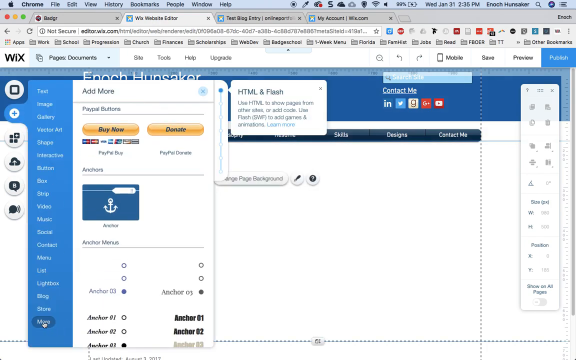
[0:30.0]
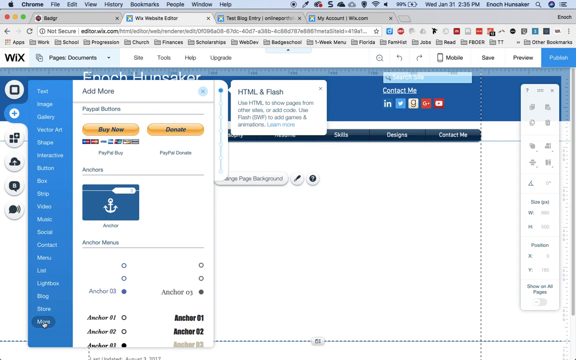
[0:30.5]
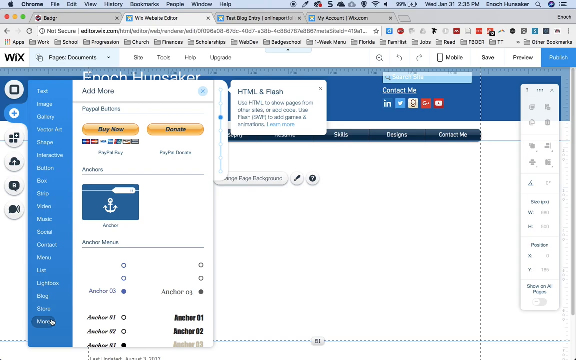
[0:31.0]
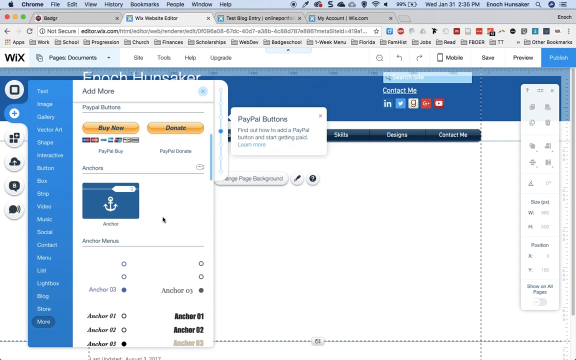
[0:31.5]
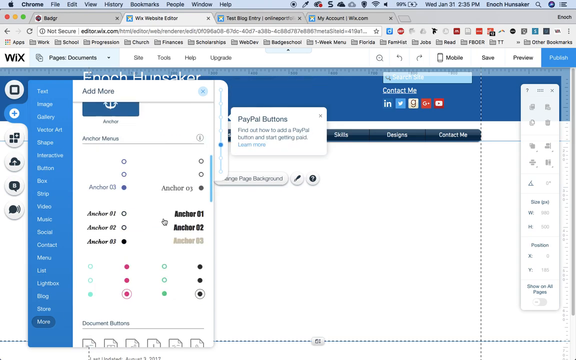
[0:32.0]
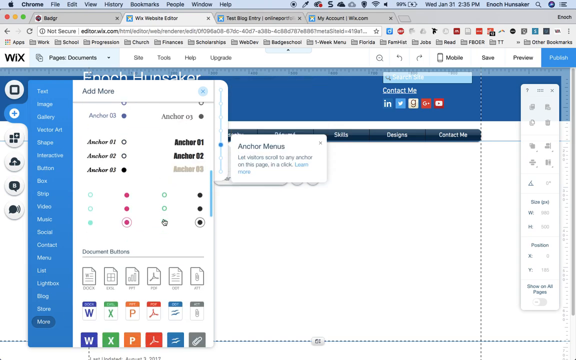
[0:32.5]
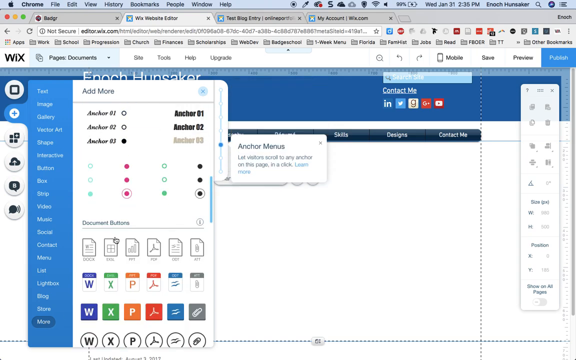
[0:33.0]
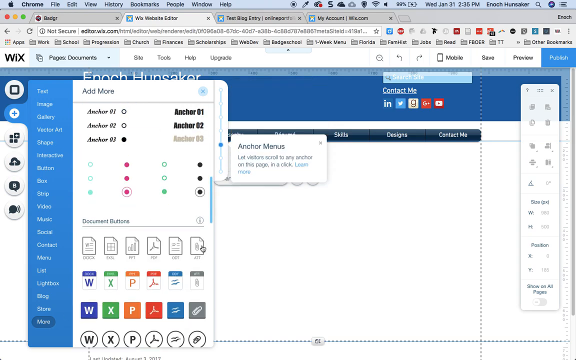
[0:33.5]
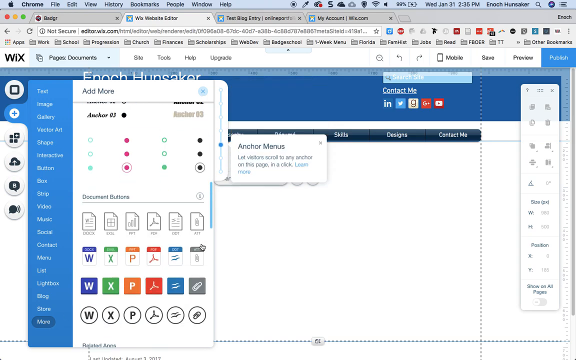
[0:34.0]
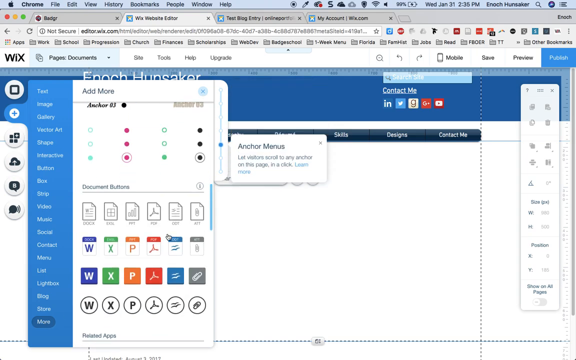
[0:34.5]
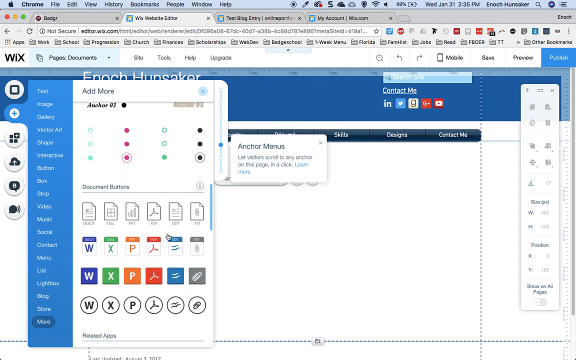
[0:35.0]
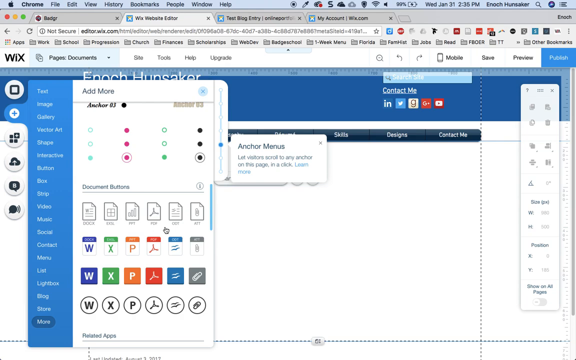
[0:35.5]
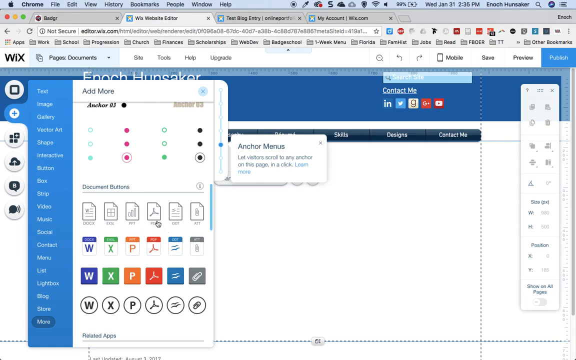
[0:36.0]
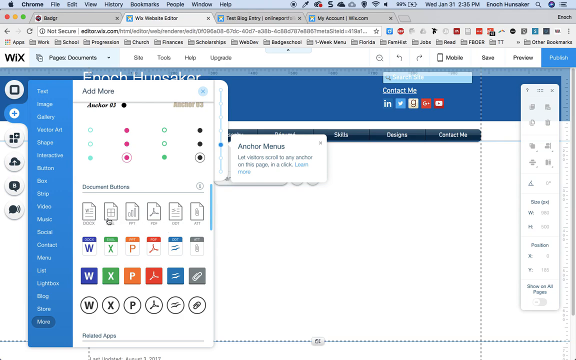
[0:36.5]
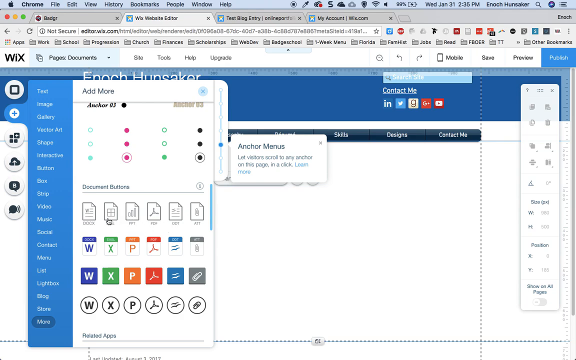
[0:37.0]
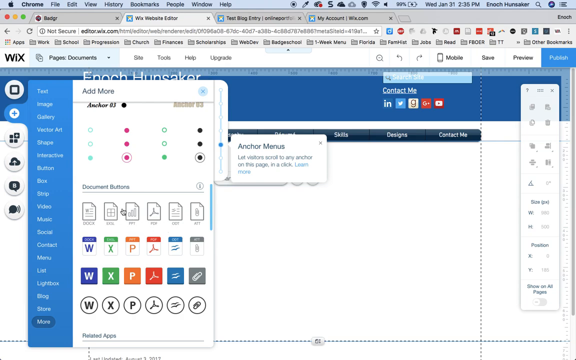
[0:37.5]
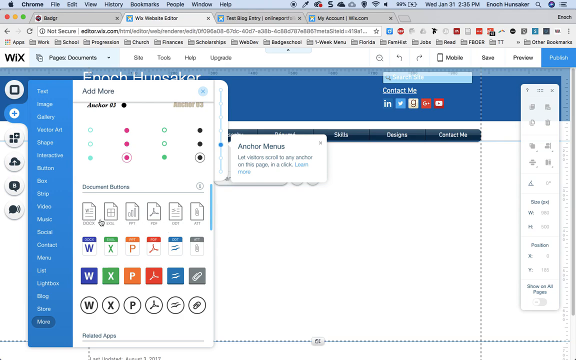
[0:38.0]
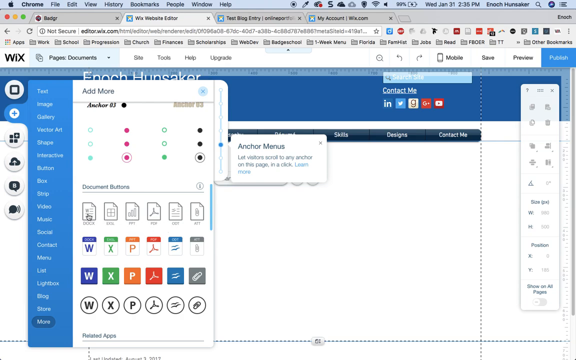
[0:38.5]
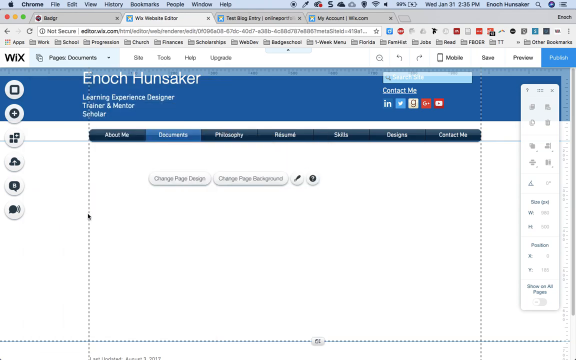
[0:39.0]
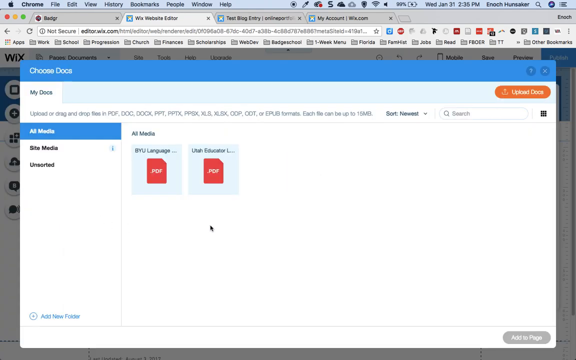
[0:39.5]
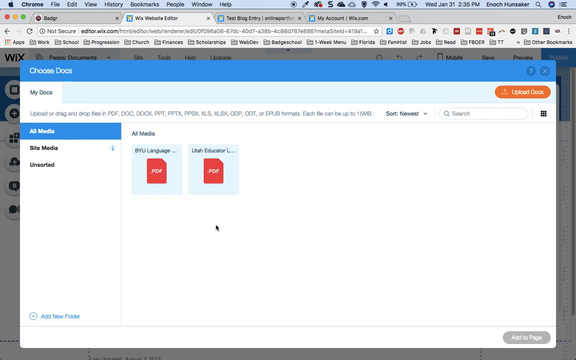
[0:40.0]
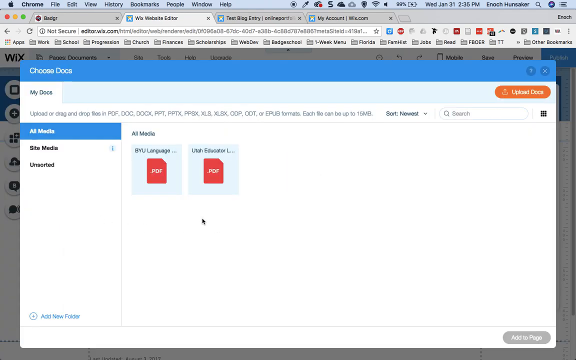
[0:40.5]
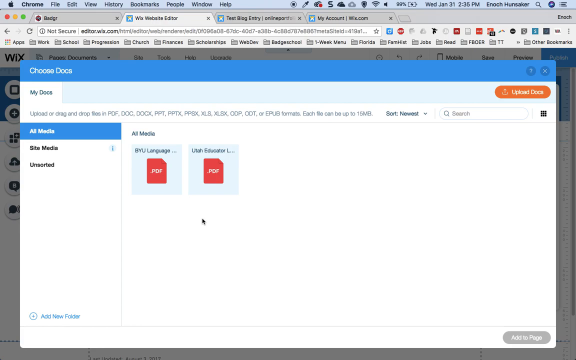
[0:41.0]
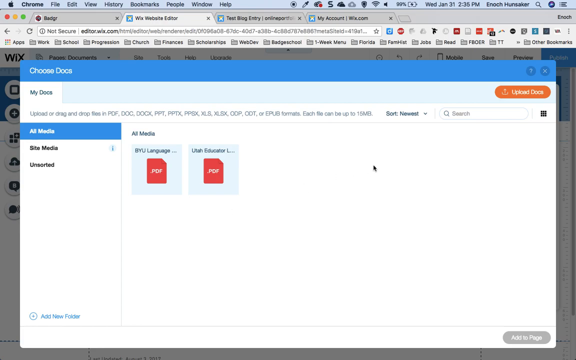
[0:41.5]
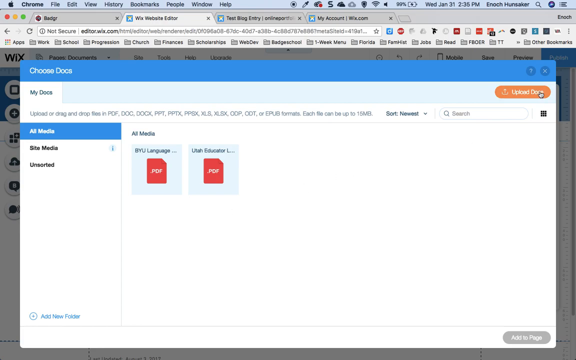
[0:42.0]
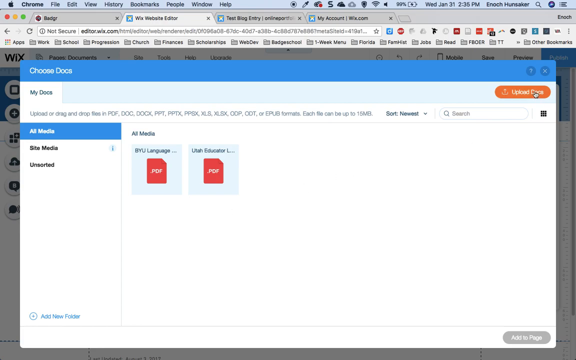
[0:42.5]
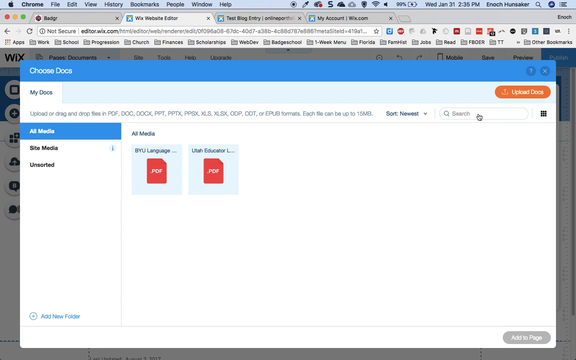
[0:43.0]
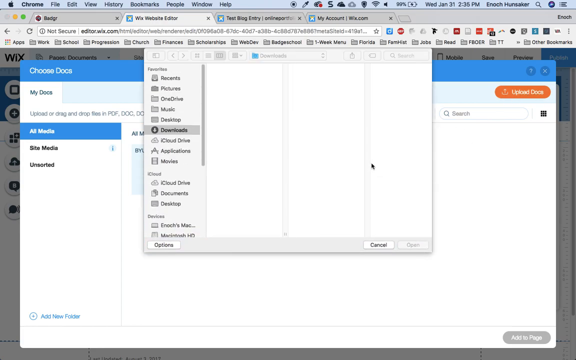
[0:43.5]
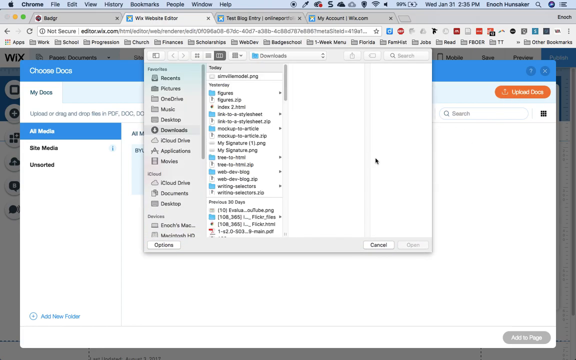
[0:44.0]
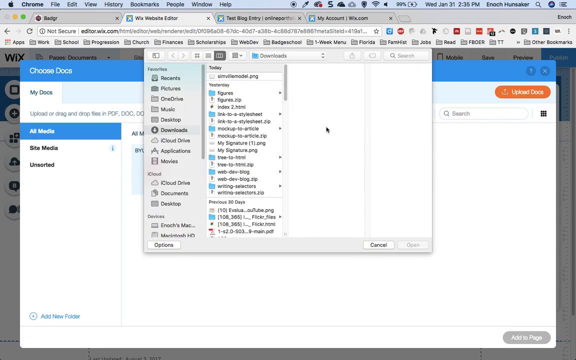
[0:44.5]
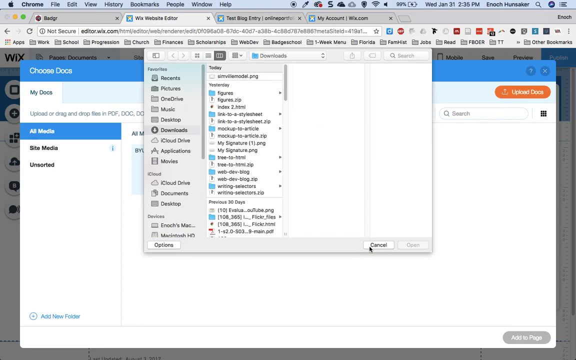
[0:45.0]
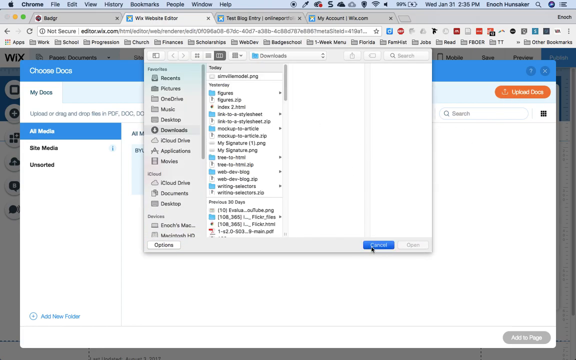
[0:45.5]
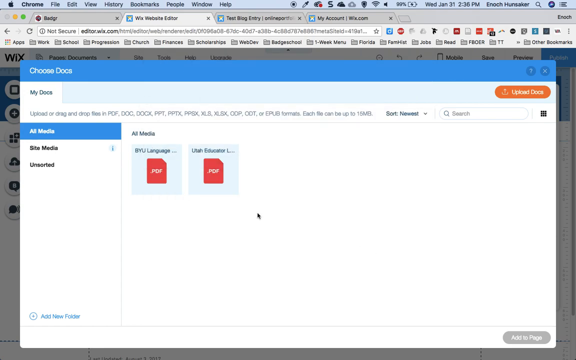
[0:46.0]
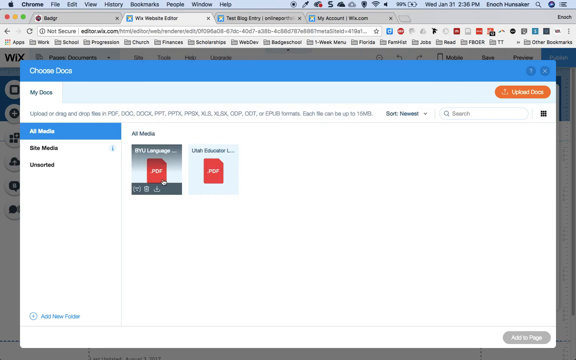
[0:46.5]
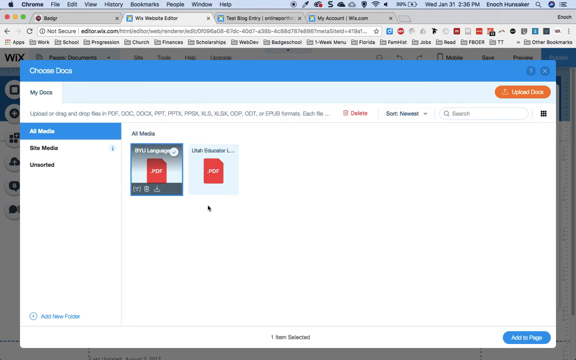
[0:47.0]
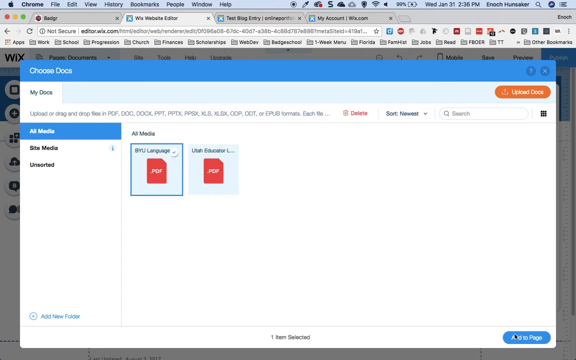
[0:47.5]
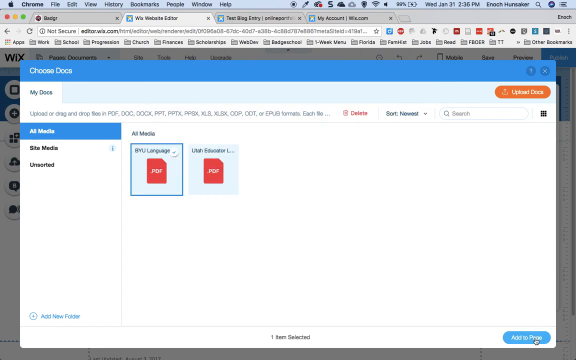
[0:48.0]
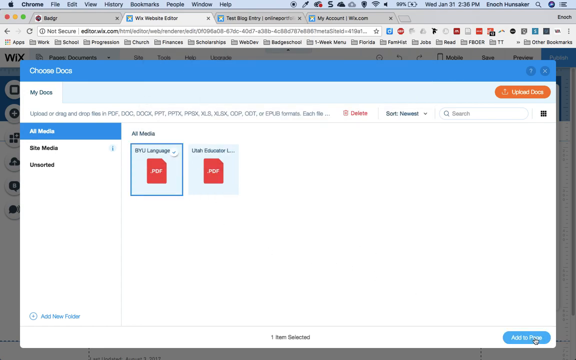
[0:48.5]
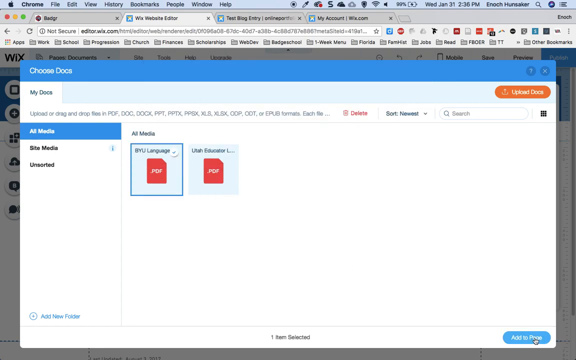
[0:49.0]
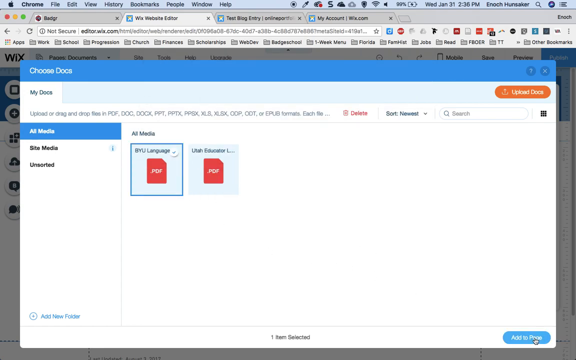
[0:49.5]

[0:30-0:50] A computer window has some pages open on the left side. On the left is a drop-down menu in white letters that reads, from top to bottom: text, image, gallery, vector art, shape, an unidentified item, button, another unidentified item, strip, video, music, social, contact, menu, list, an unreadable item, blog, and store. To the right, on a white background, black letters at the top read "add more", and below that "PayPal buttons". Below that is an orange button reading "buy now", and to its right an orange button reading "donate". Below that it says "anchors", with something that looks like a blue credit card with a white anchor on it. To the right of this, a tab coming off of it says "HTML and Flash", with black writing below. The mouse pointer scrolls down to the bottom, where it says "documents and buttons", and some documents are open. It clicks on documents and goes to a page showing all media. The pointer goes to the top right and clicks "upload docs"; a drop-down menu appears and it clicks done. It then clicks on the BYU language file.